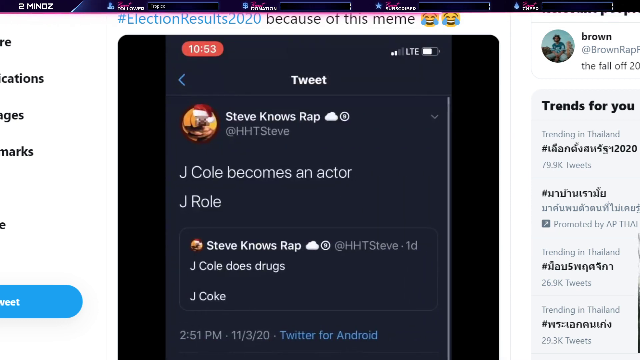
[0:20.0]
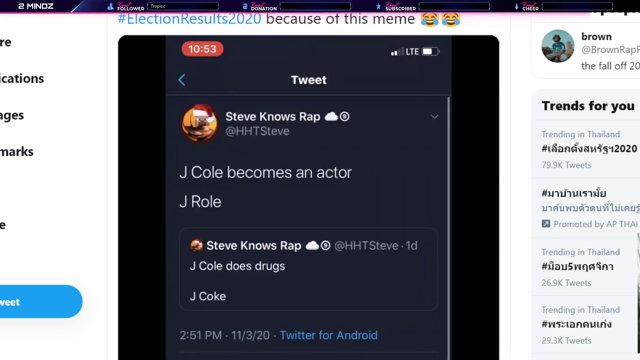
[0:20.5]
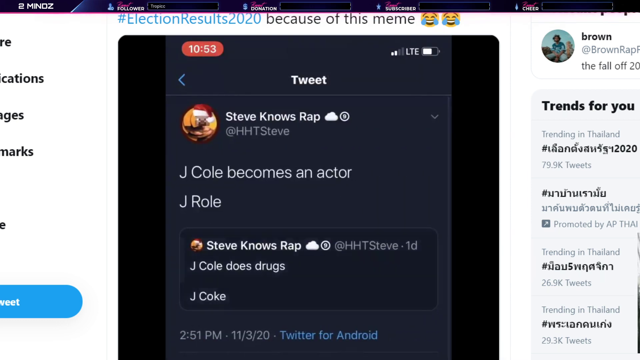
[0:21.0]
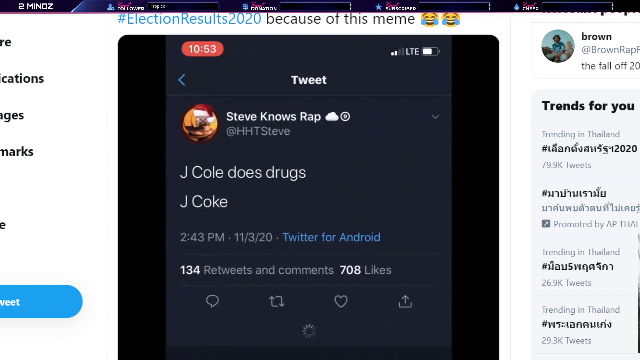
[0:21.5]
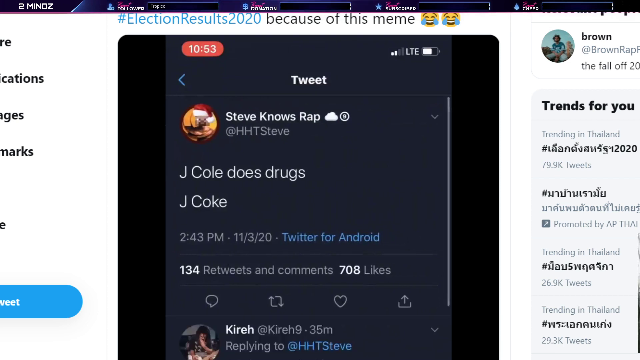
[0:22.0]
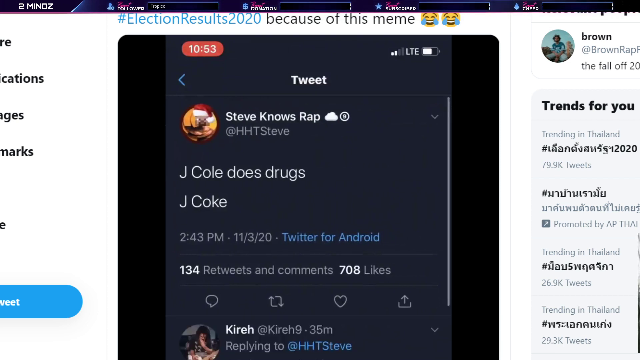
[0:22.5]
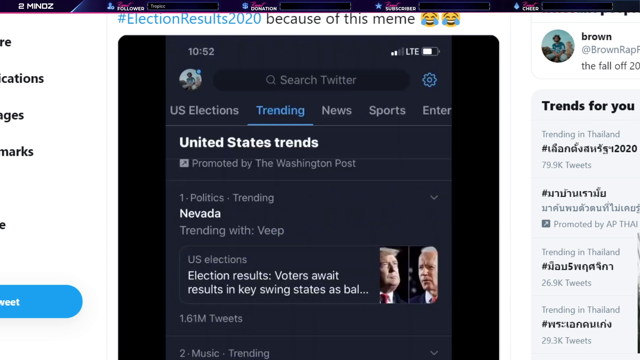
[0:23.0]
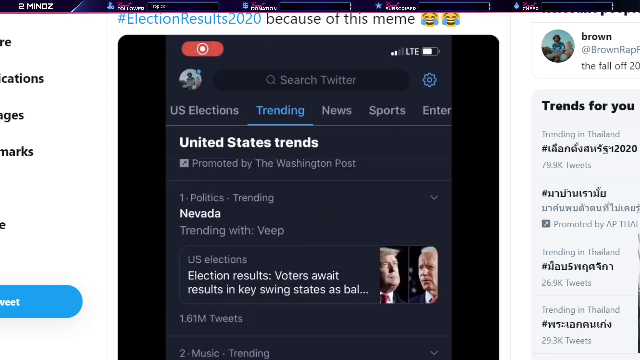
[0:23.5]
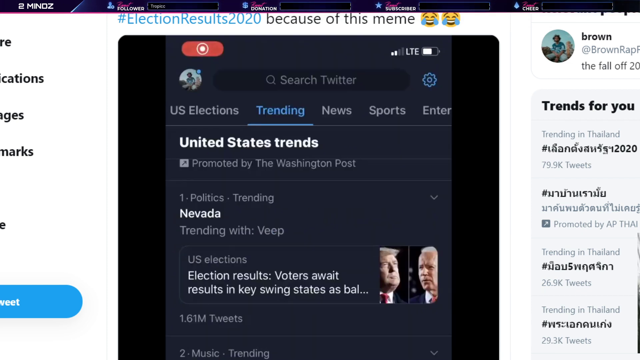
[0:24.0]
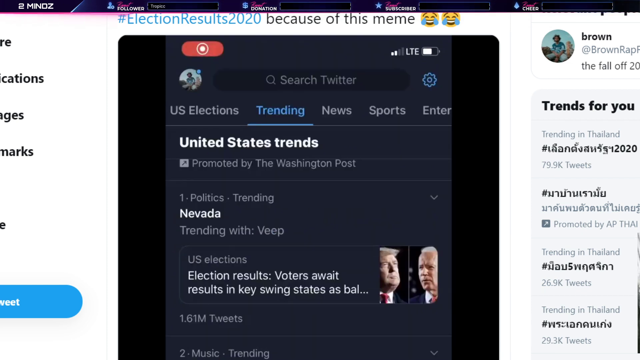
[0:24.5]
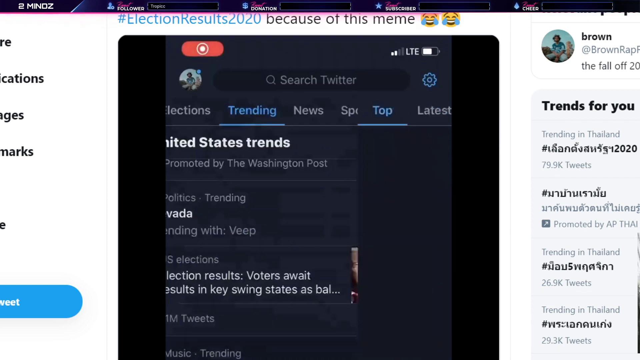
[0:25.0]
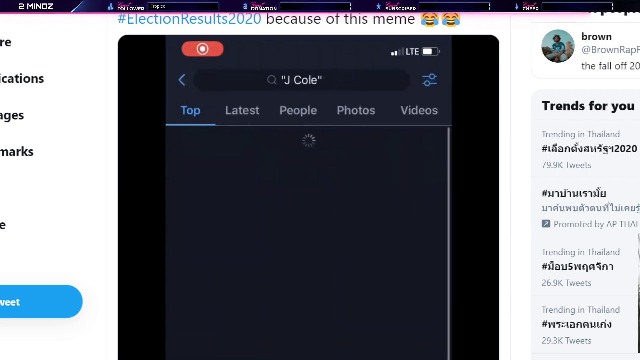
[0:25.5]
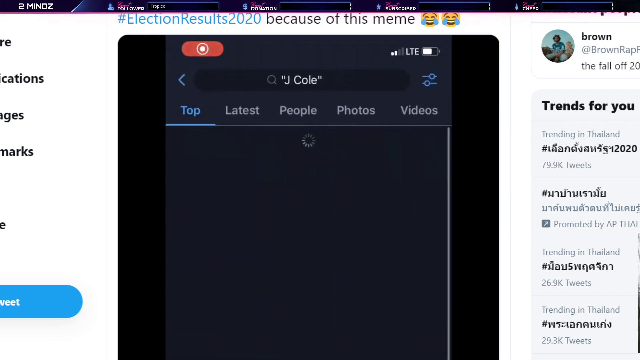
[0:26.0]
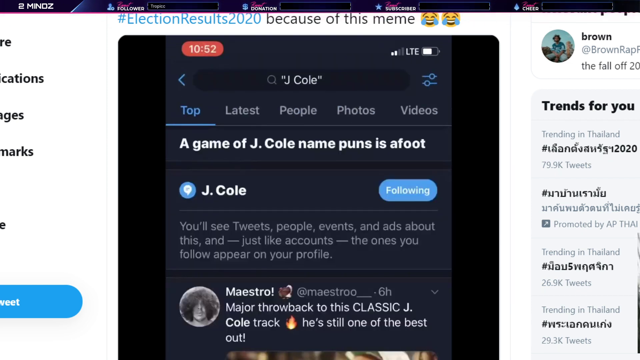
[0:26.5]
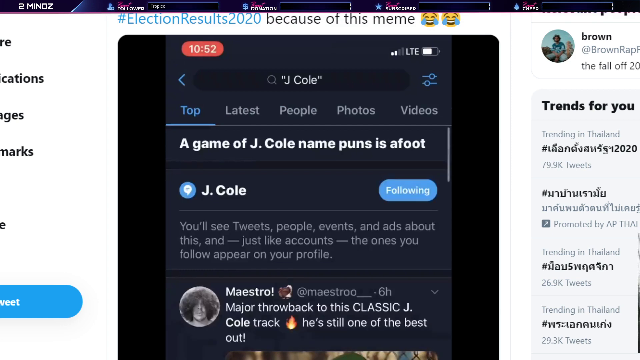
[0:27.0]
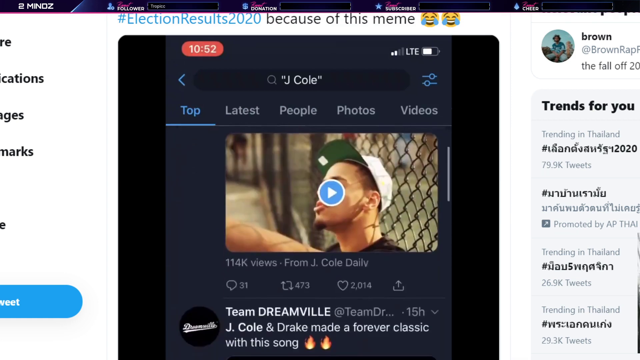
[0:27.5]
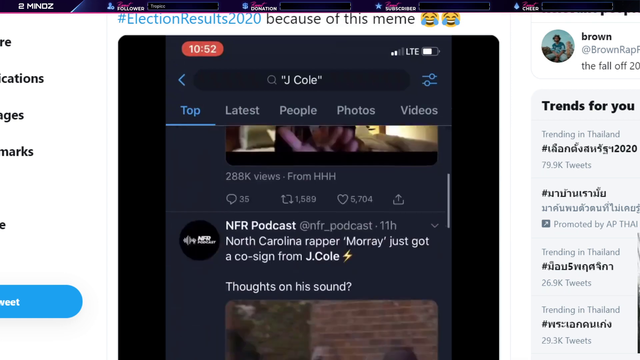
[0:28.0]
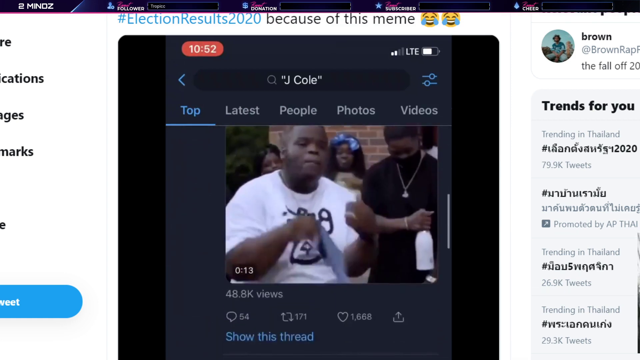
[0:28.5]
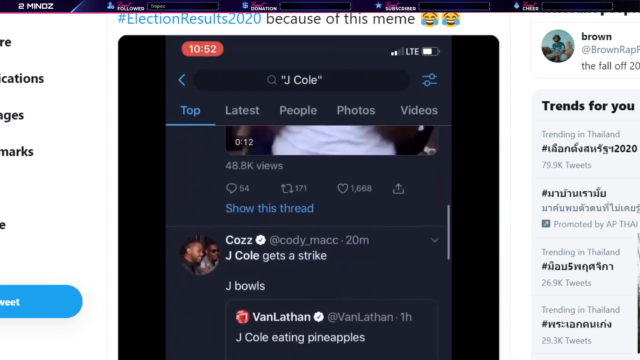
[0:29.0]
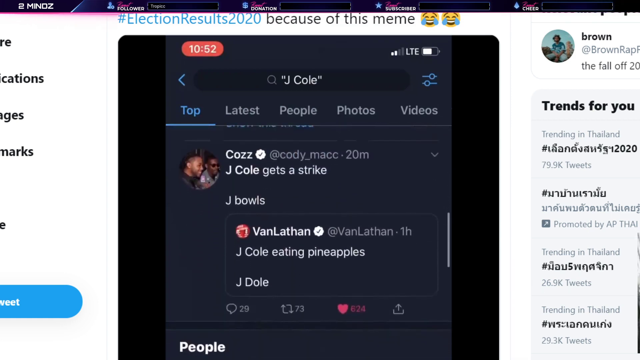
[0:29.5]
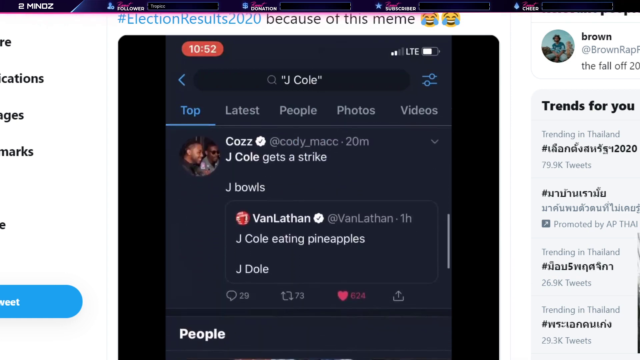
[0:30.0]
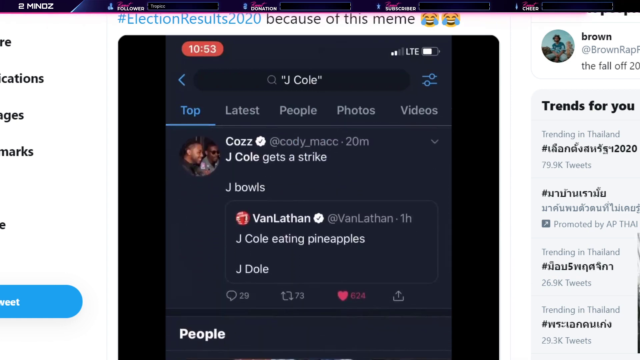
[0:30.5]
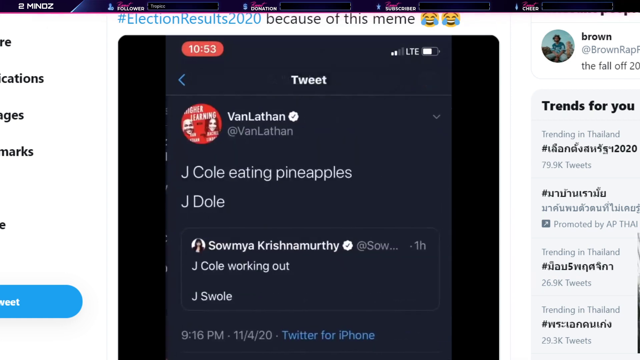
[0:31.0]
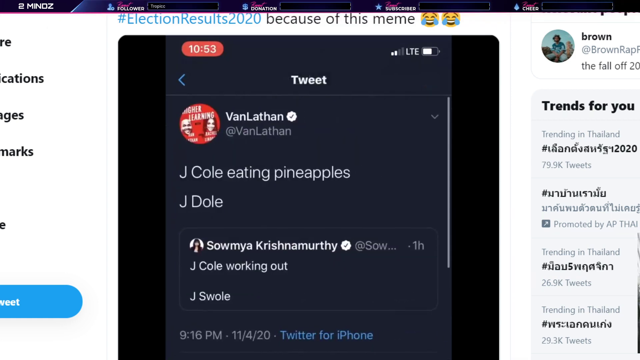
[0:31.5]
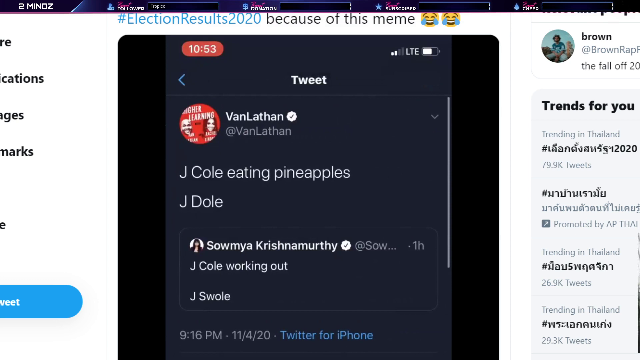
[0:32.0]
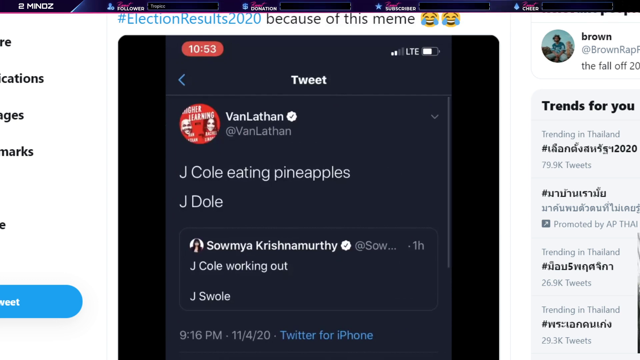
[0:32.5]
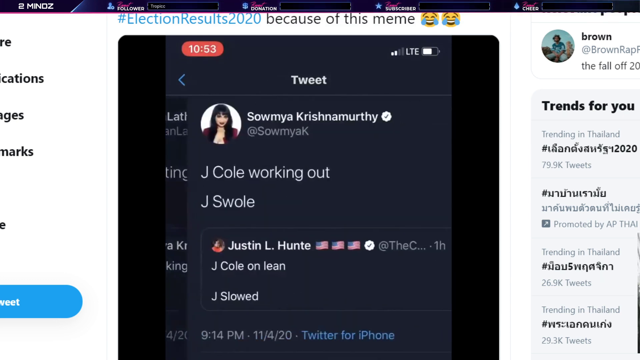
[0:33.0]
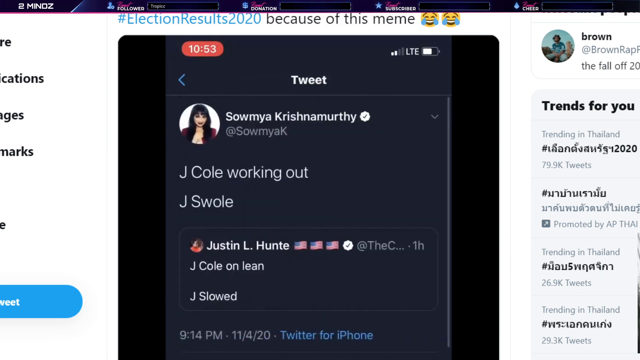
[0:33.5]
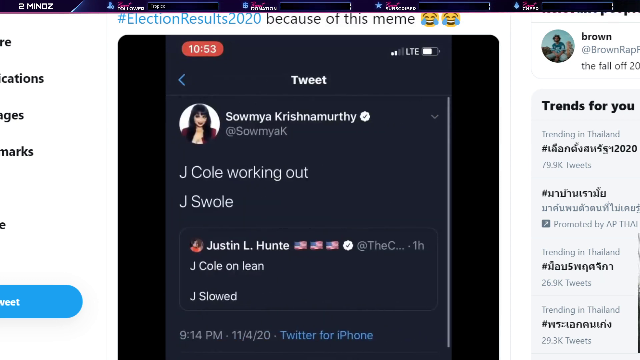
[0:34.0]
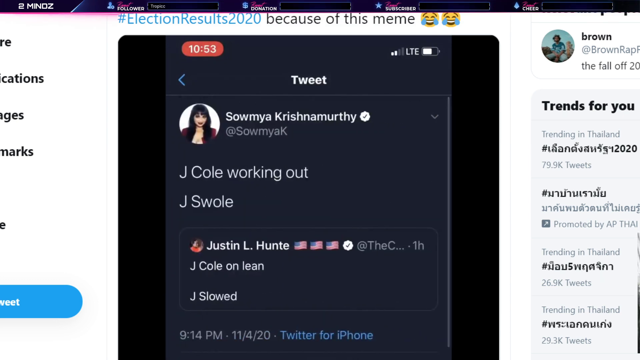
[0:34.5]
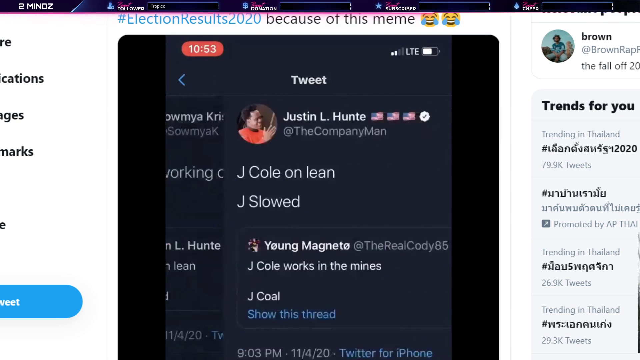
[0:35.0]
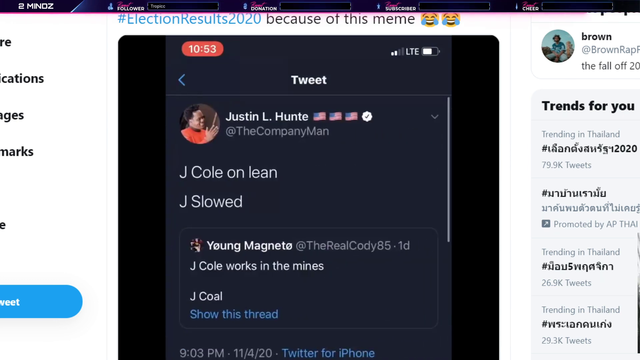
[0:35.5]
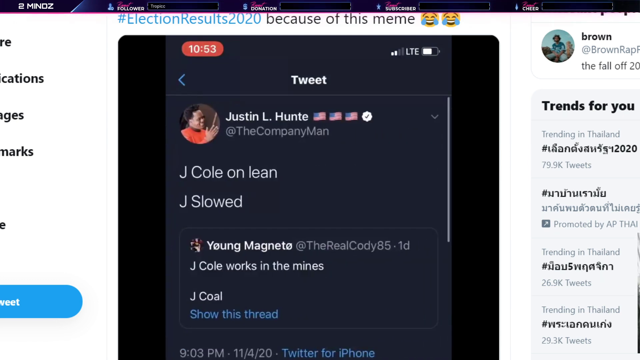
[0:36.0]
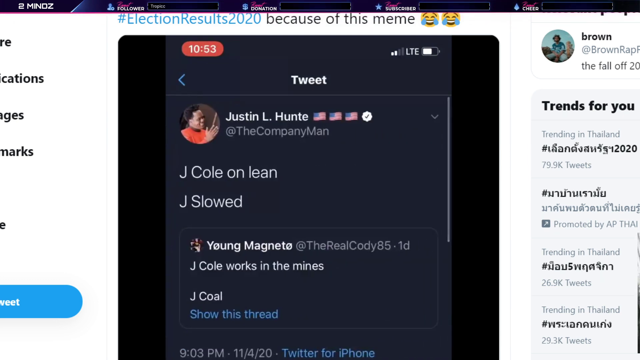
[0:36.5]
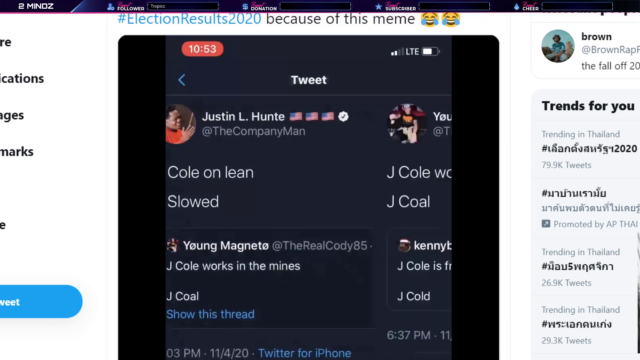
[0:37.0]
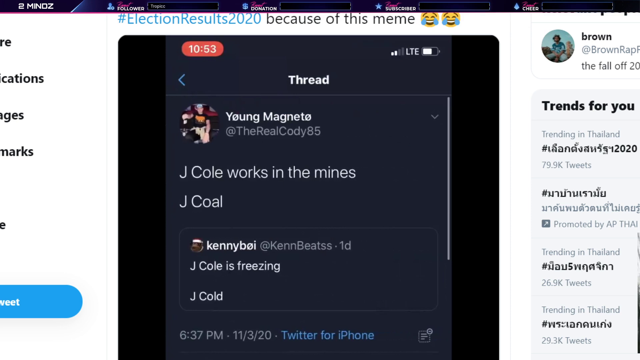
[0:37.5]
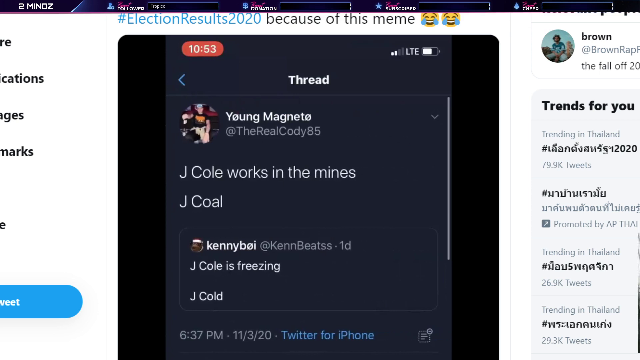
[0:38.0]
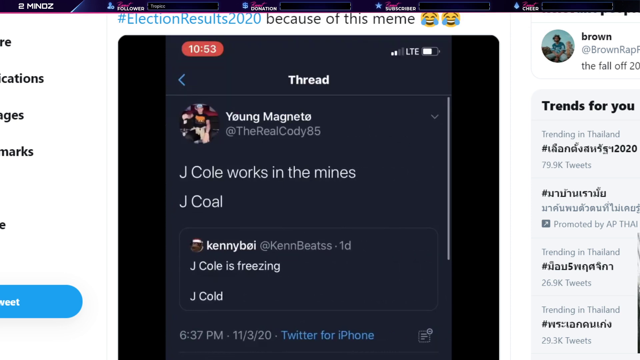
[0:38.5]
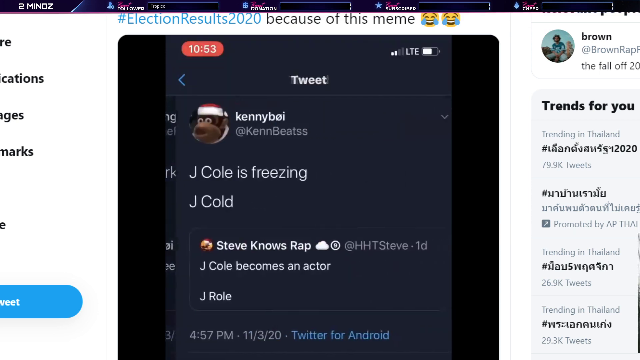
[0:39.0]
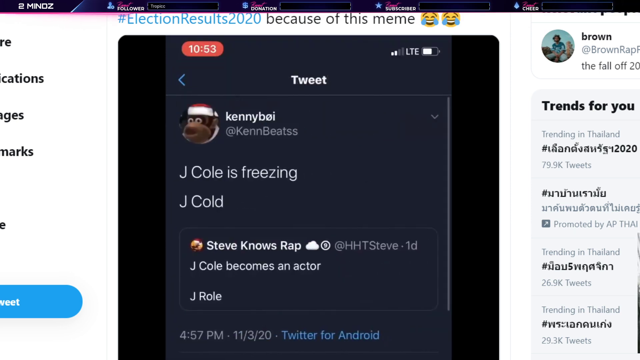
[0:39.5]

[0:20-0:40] More tweets about J. Cole appear, such as one that says "J. Cole does drugs. J. Coke." The user goes back to trending, where United States trends are listed, and the page shows it is promoted by the Washington Post. The user searches for J. Cole, and a J. Cole game is shown with its name. The person appears to be following J. Cole. He scrolls down, and Chris Brown is visible, followed by another musician with a video of him singing. Several tweets about the J. Cole meme are shown. On the left of the page, "Trends for you" is written in bold, with "trending in Thailand" and "79,900 tweets". The on-screen video shows 10 minutes.